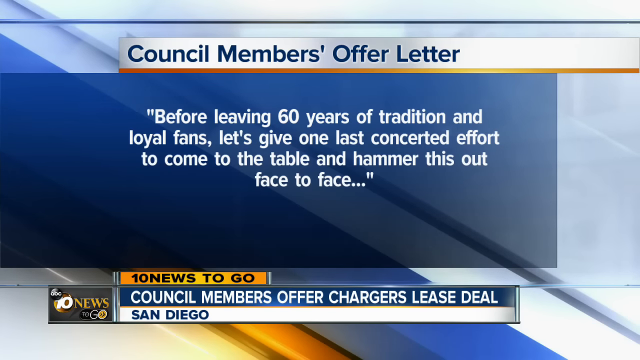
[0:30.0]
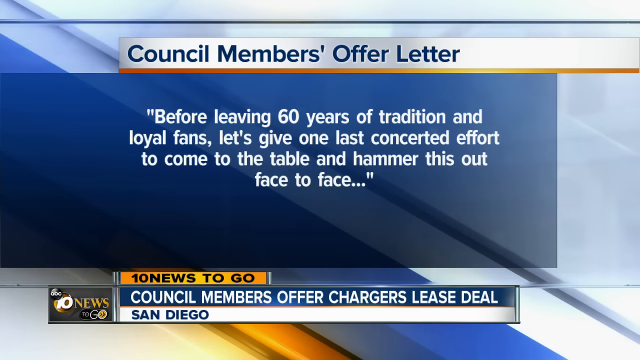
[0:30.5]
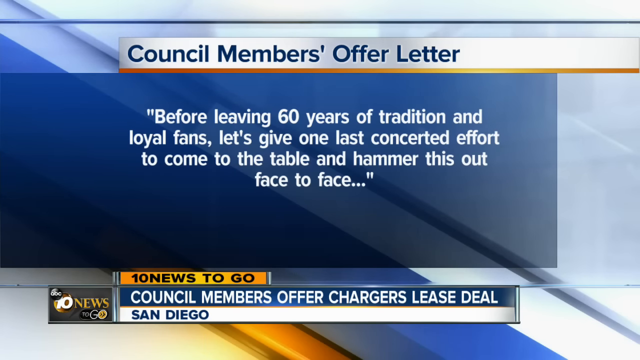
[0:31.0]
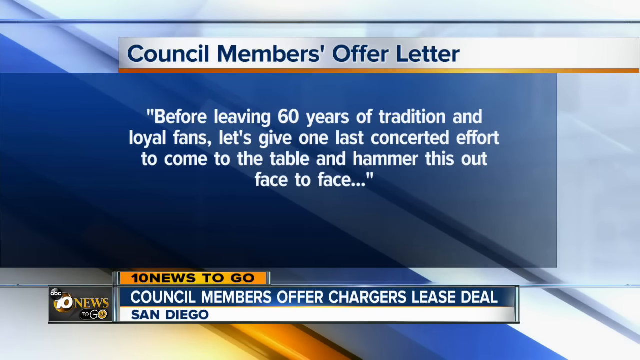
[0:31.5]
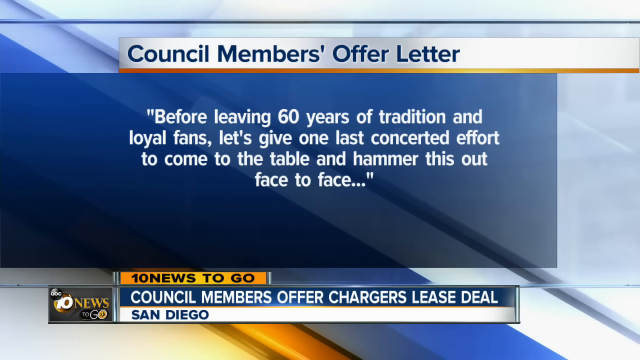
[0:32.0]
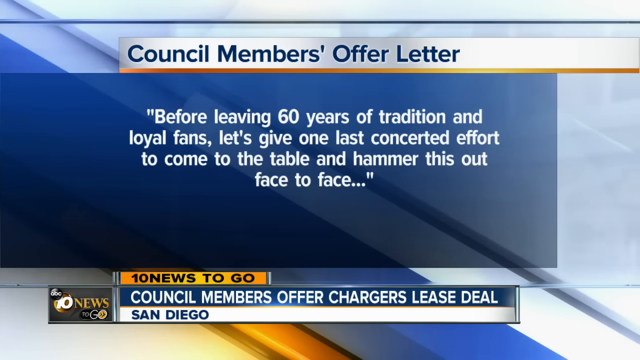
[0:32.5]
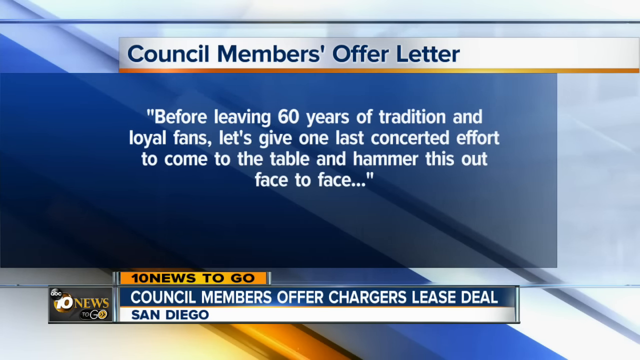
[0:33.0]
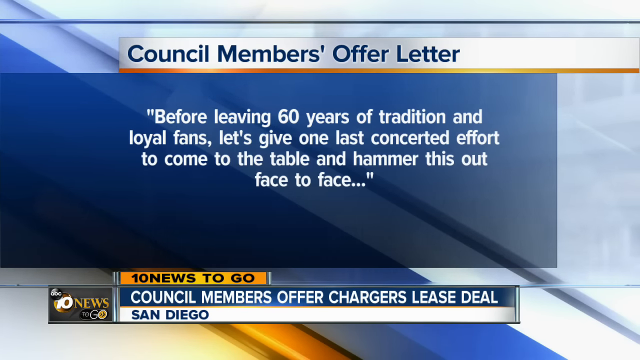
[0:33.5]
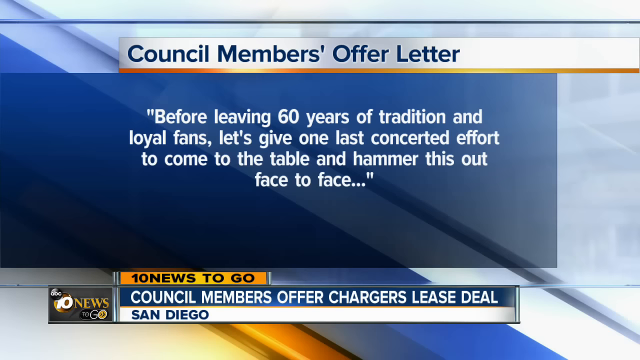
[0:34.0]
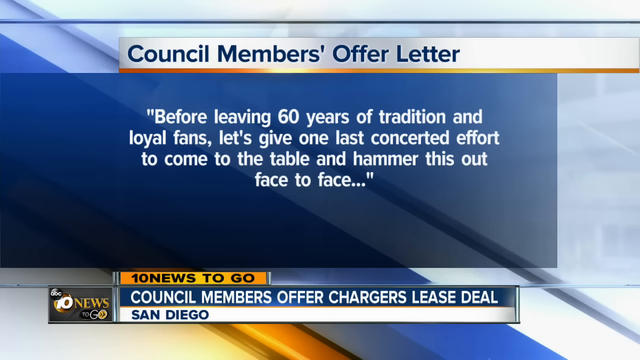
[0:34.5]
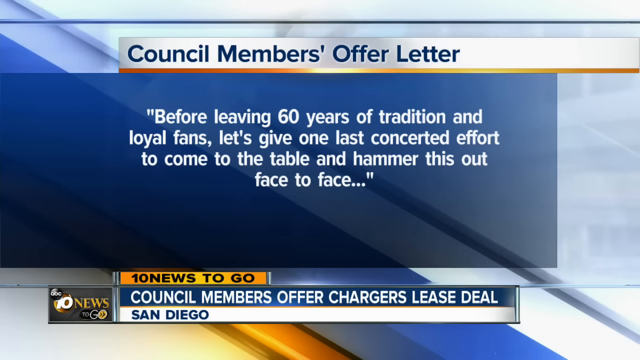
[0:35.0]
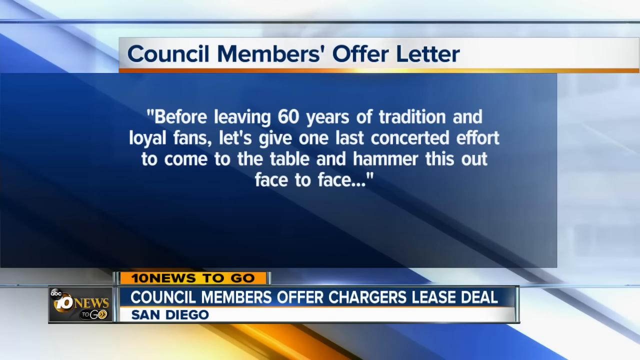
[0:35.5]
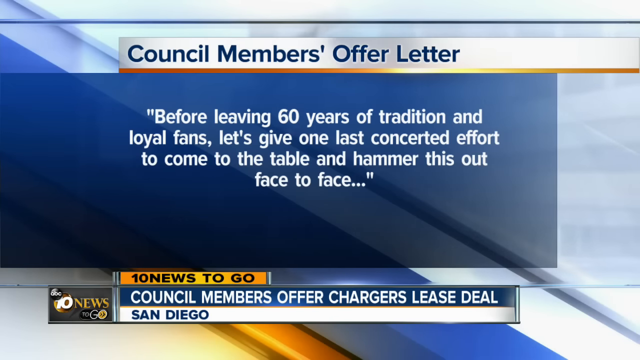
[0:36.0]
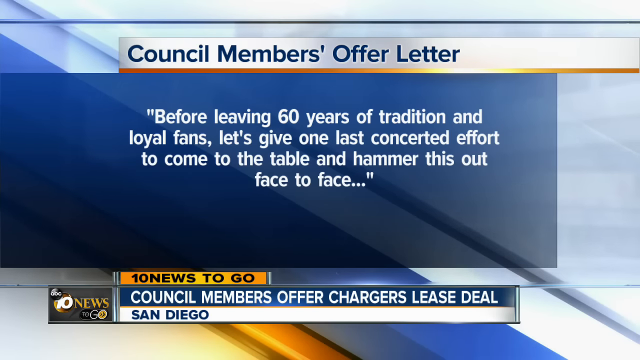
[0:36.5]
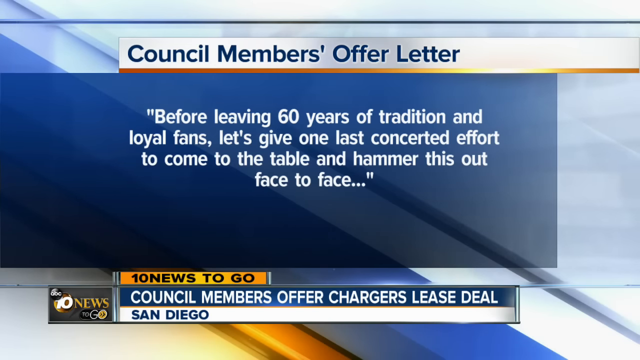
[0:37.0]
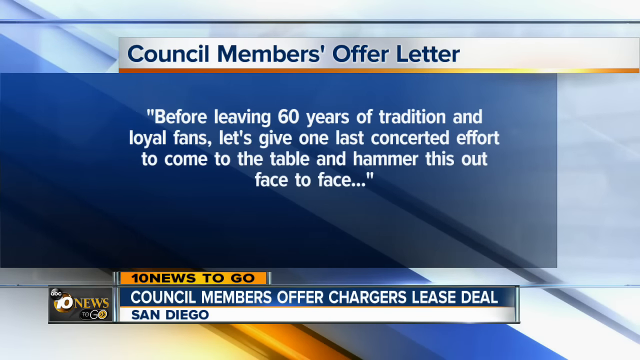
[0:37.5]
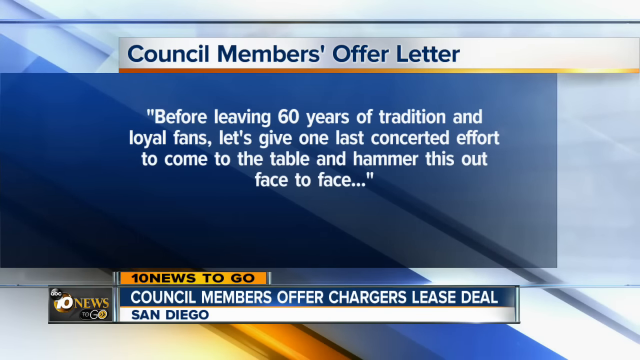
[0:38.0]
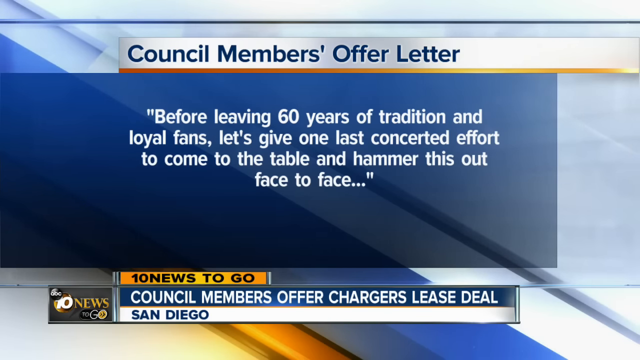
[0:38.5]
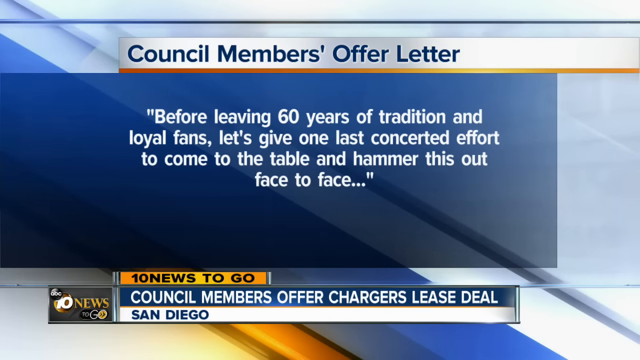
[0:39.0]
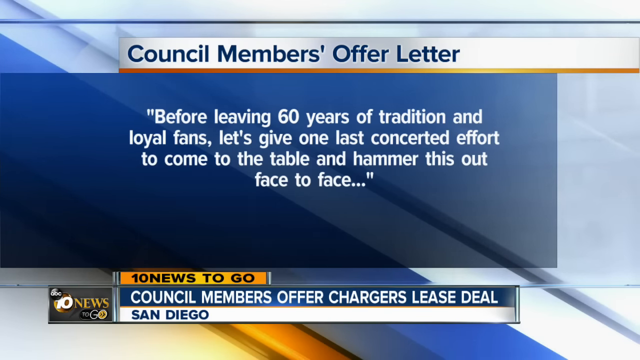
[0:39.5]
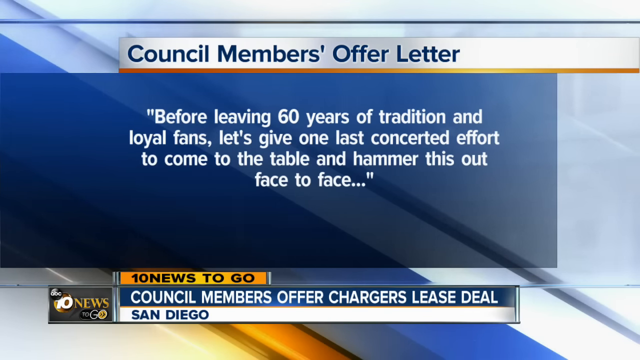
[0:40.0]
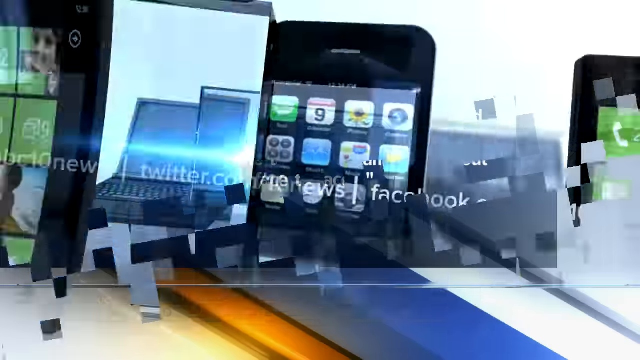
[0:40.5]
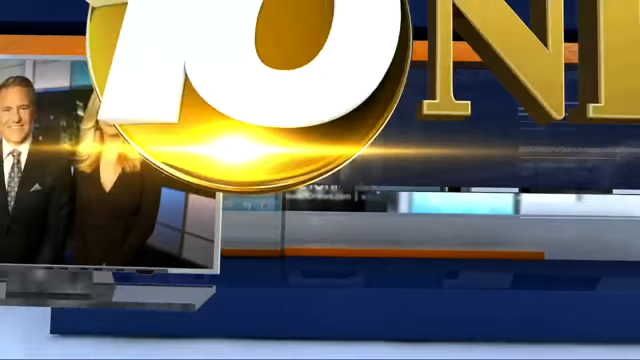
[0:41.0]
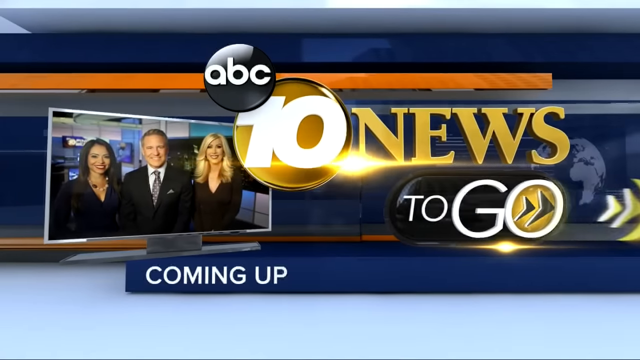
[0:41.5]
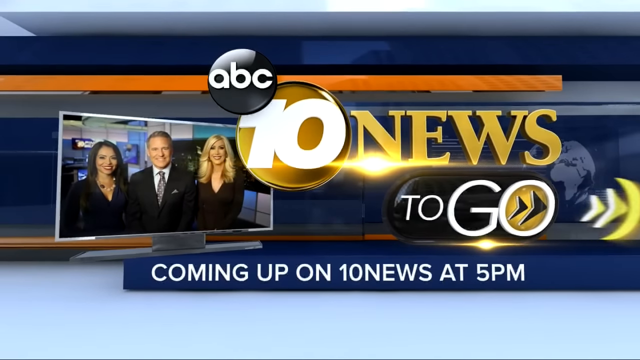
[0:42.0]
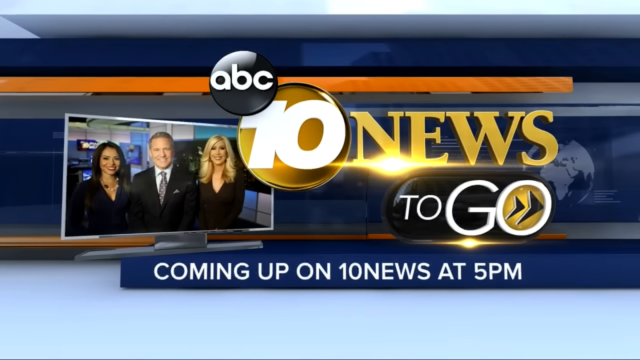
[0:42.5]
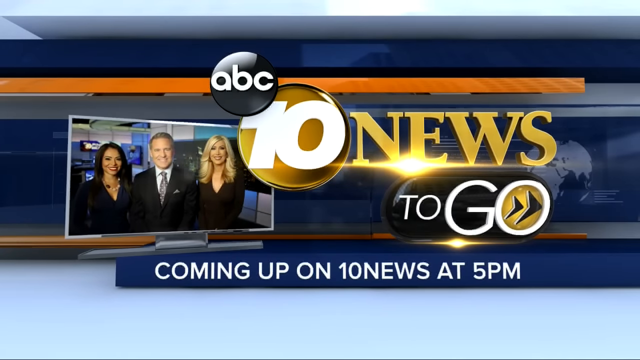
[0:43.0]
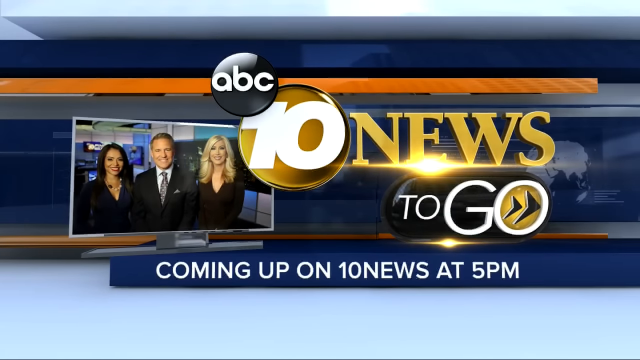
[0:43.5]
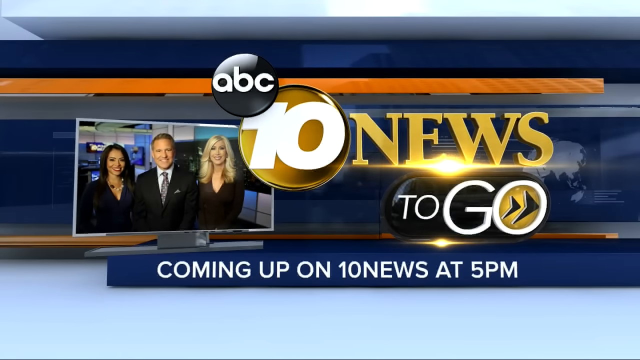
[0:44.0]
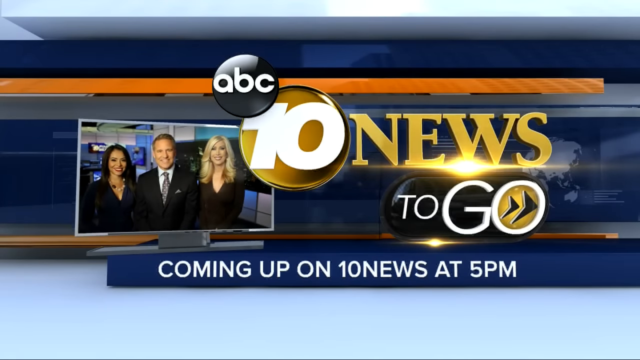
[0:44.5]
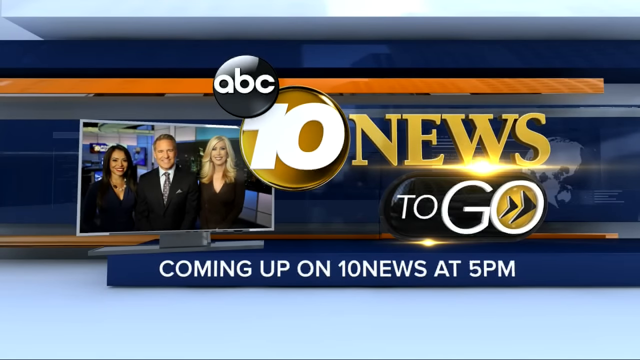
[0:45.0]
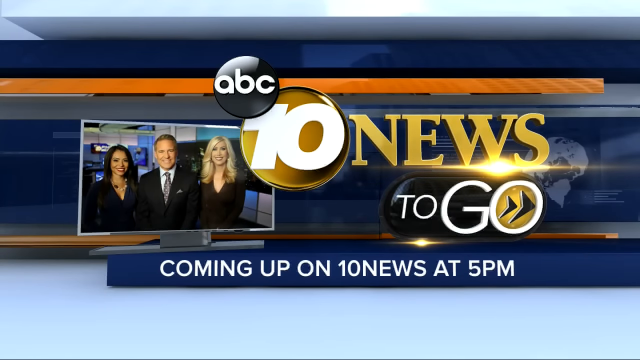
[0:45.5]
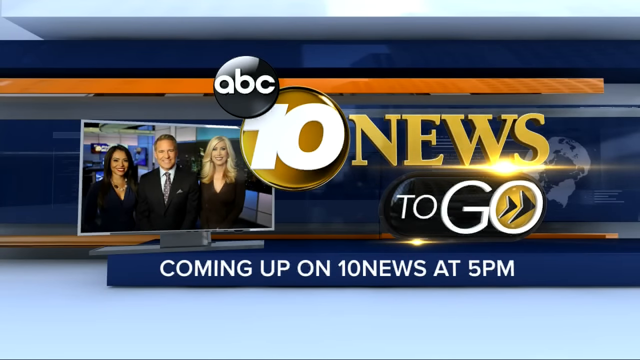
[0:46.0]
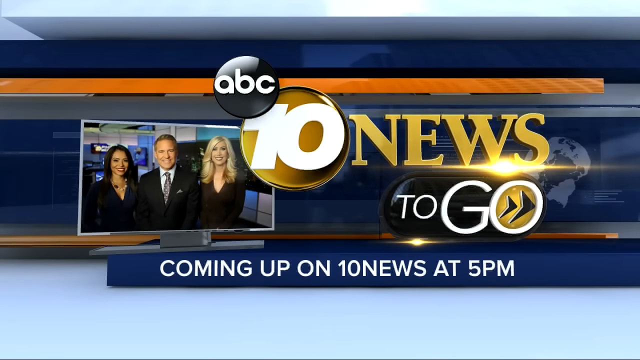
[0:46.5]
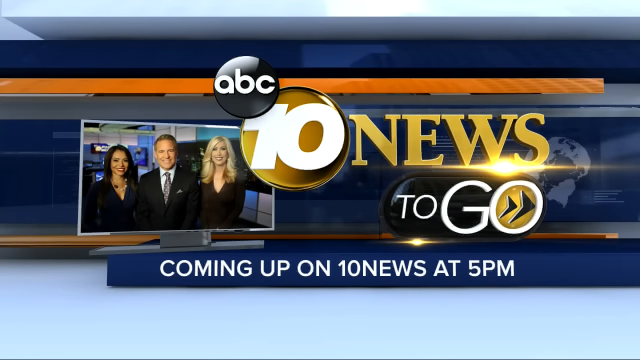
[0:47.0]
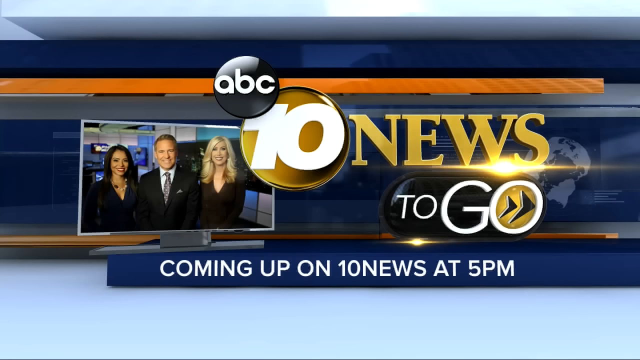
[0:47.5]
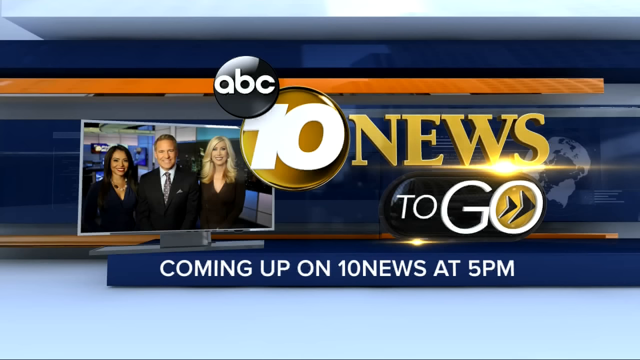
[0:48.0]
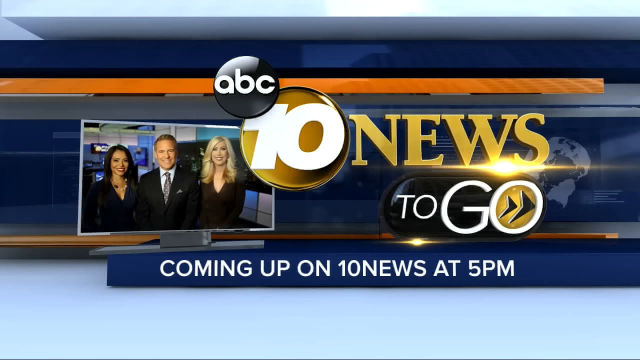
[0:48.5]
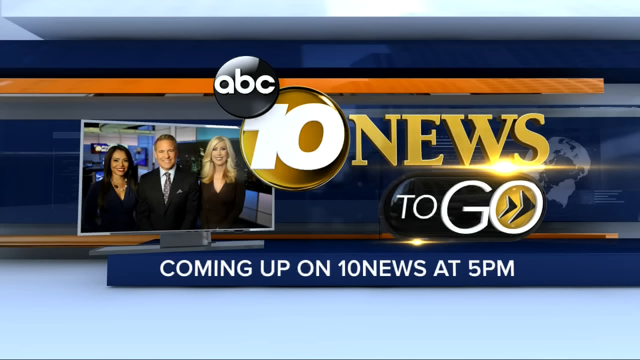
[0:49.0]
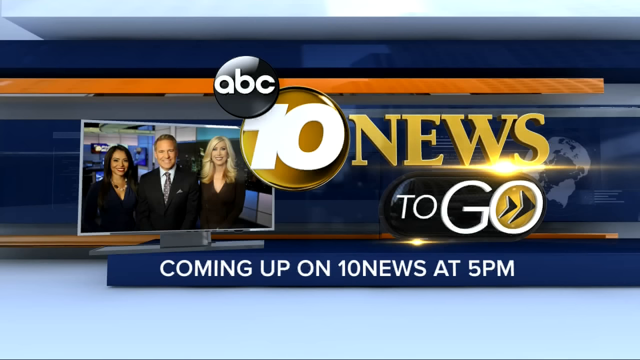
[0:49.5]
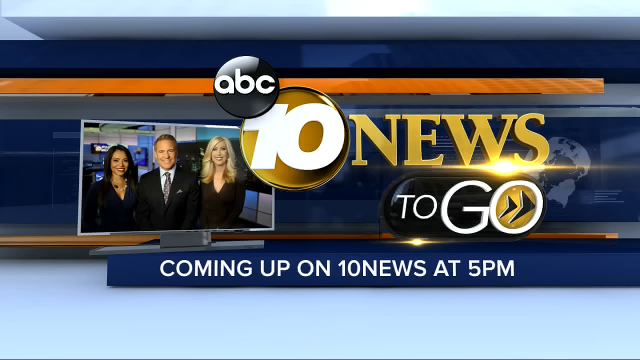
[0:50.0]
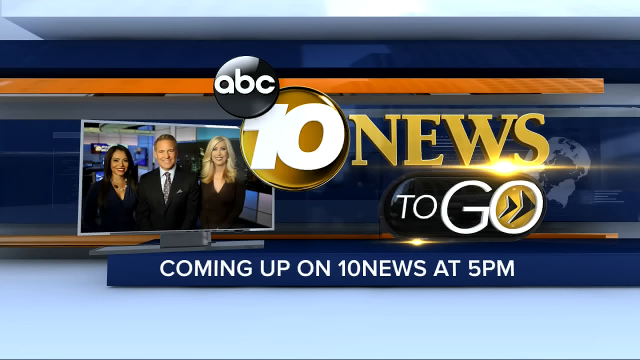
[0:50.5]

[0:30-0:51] The segment about the council members' lease deal offer to the Chargers continues, with the offer of $1 a year for 99 years, and text reading "before leaving 60 years of tradition and loyal fans, let's give one last concerted effort to come to the table and hammer this out face to face," on Channel 10 News to go. Next, text reads "coming up on News 10 at 5pm" and "10 news to go," and three people appear: a man in the middle, a dark-haired woman on the left, and a blonde-haired woman on the right. All wear dark clothing, and the man has on a suit, shirt and tie. The ABC branding appears, with what seems to be orange and blue: the "10" is in white, "news" is in a kind of orange, and "to" and "go" are written in white. In the middle of "go" there are a couple of arrows, as if pointing in a direction.